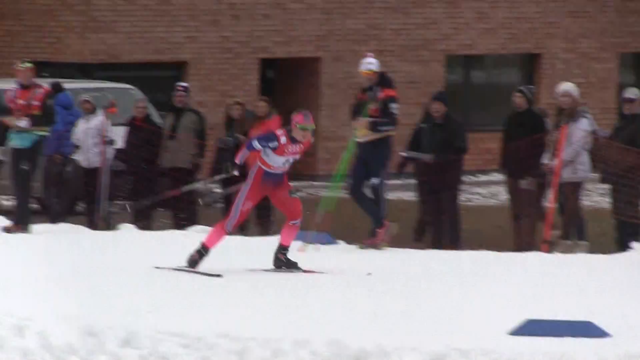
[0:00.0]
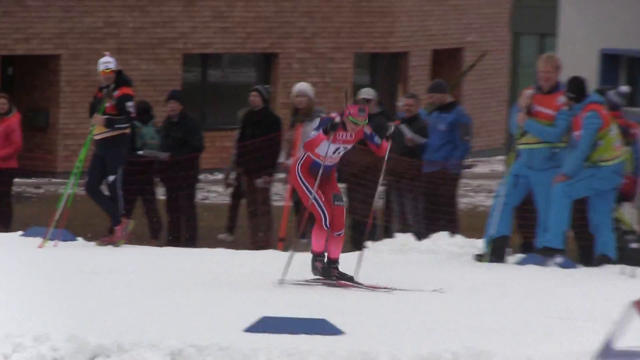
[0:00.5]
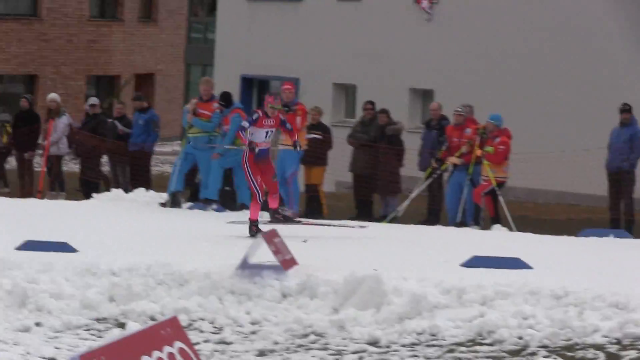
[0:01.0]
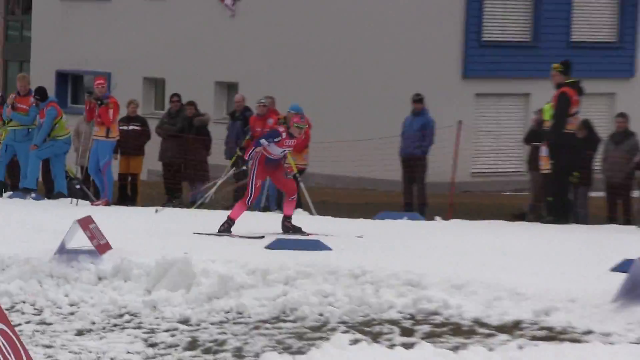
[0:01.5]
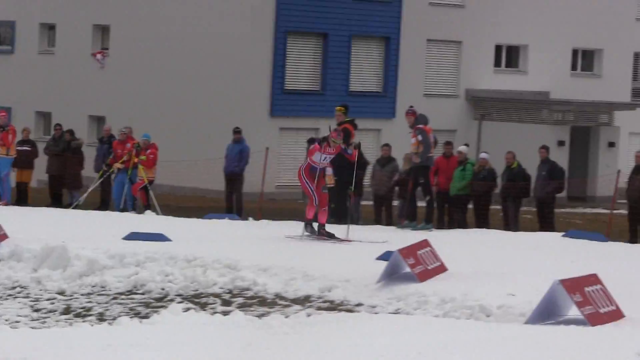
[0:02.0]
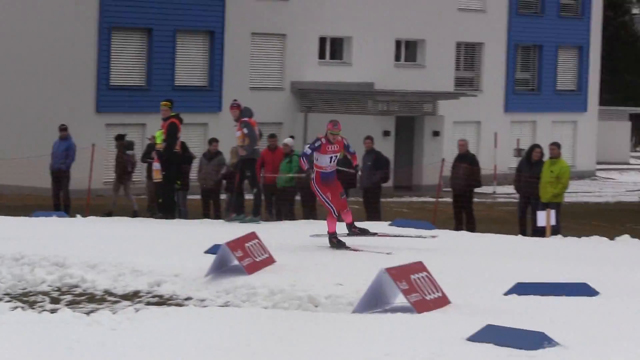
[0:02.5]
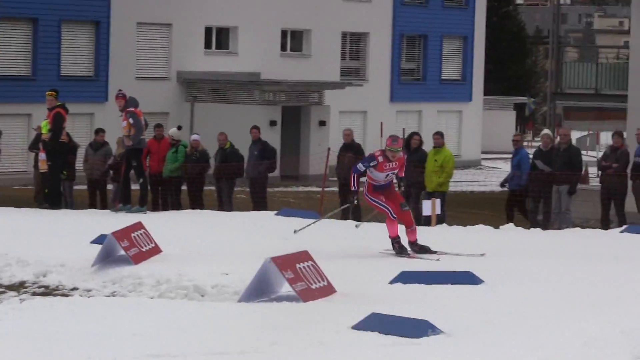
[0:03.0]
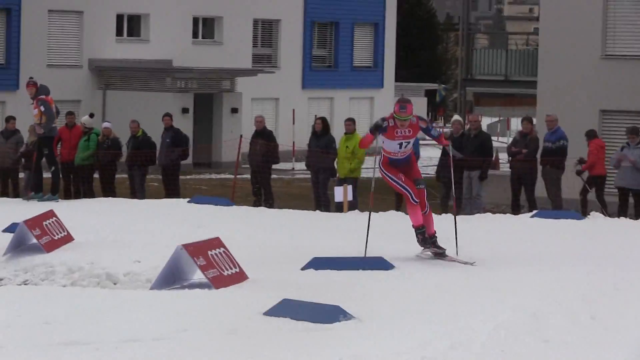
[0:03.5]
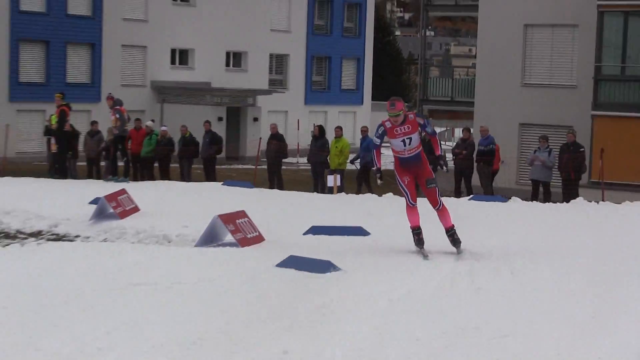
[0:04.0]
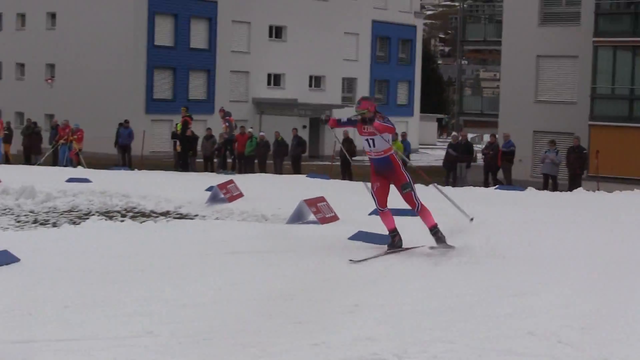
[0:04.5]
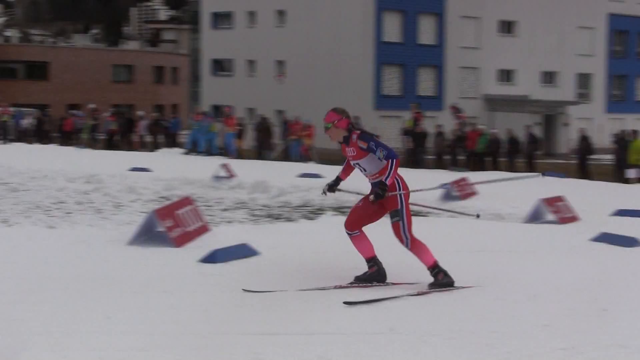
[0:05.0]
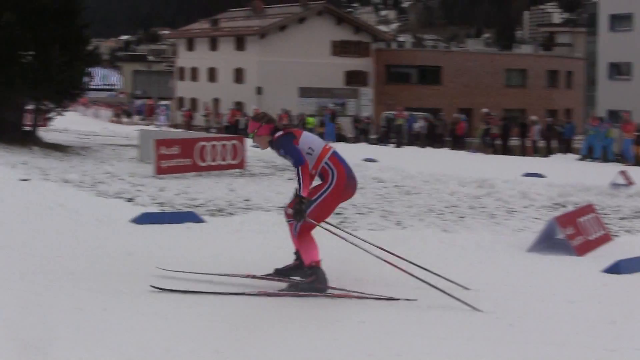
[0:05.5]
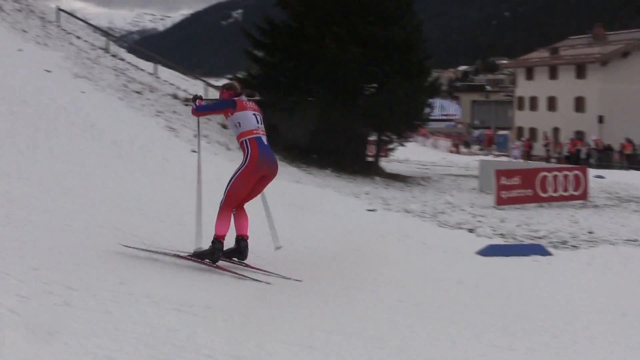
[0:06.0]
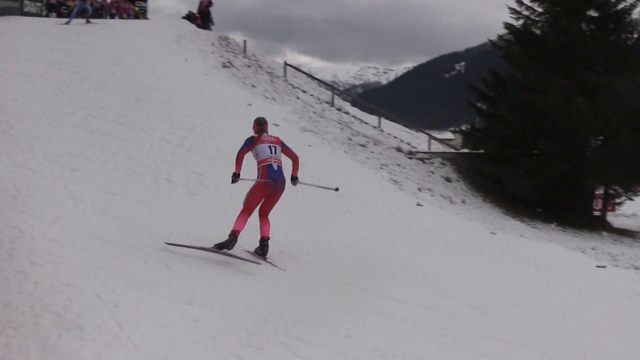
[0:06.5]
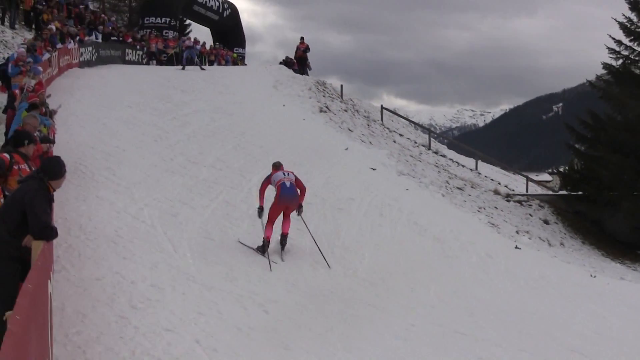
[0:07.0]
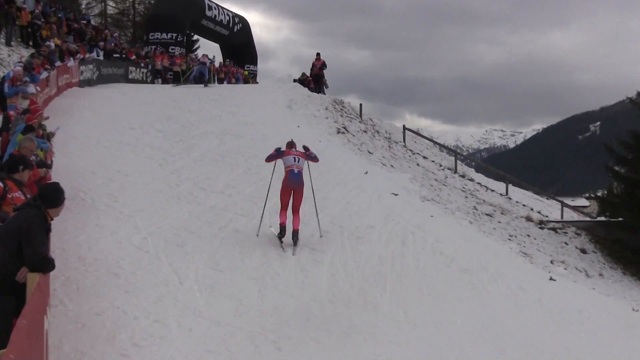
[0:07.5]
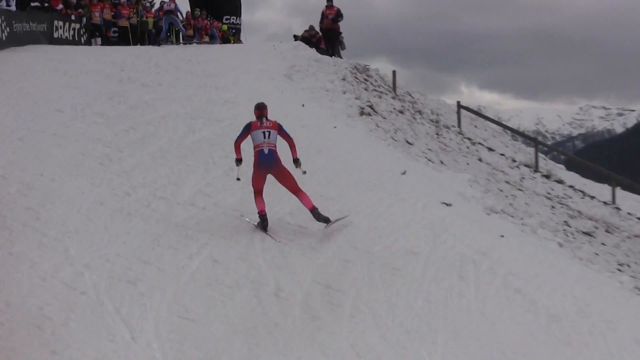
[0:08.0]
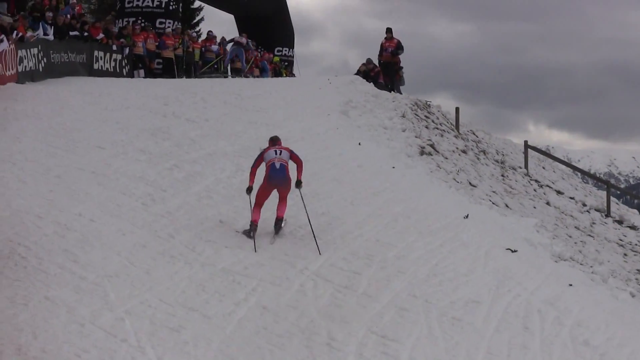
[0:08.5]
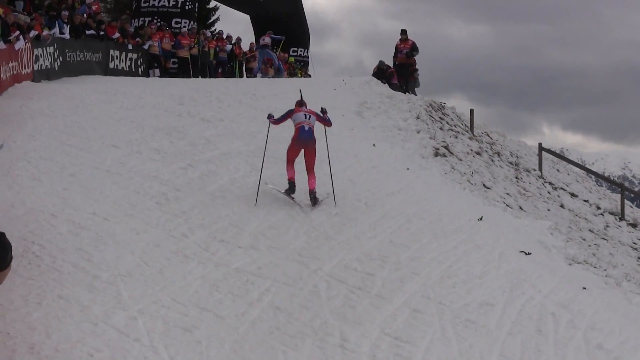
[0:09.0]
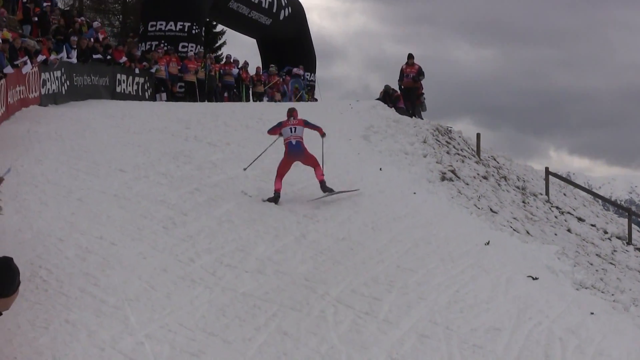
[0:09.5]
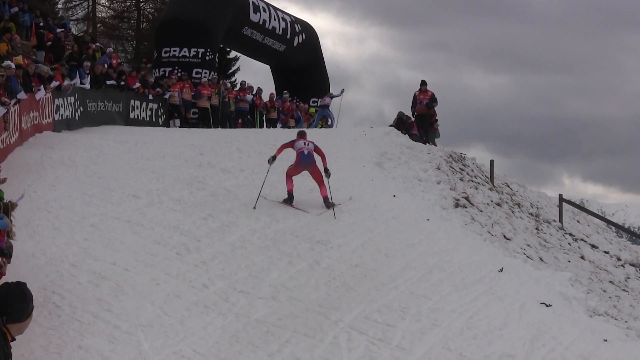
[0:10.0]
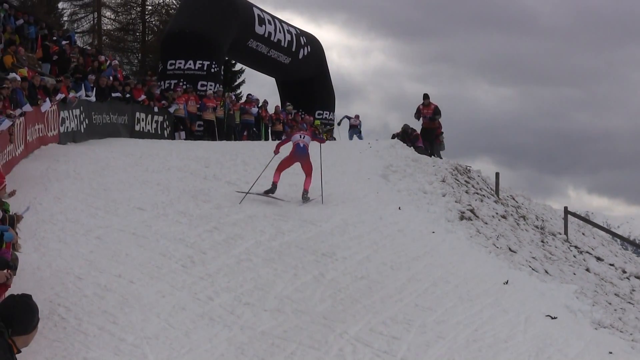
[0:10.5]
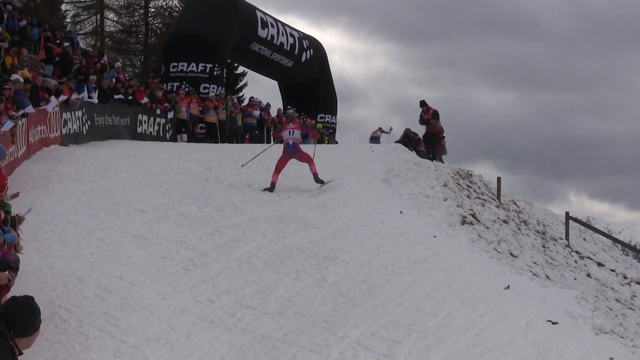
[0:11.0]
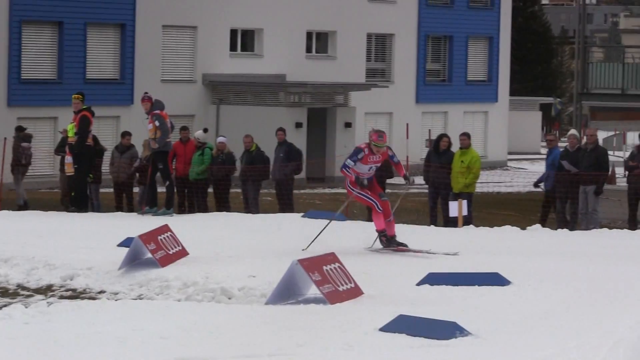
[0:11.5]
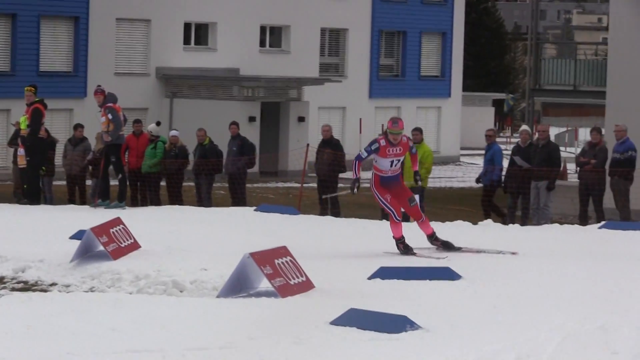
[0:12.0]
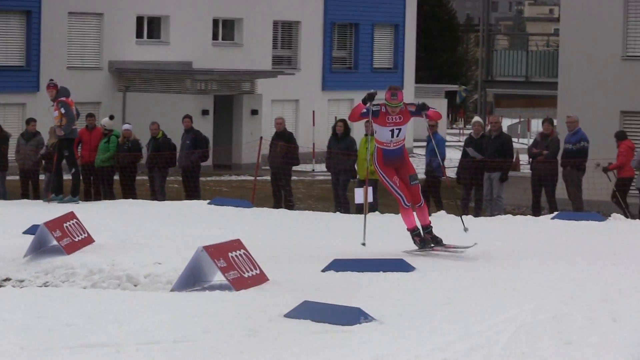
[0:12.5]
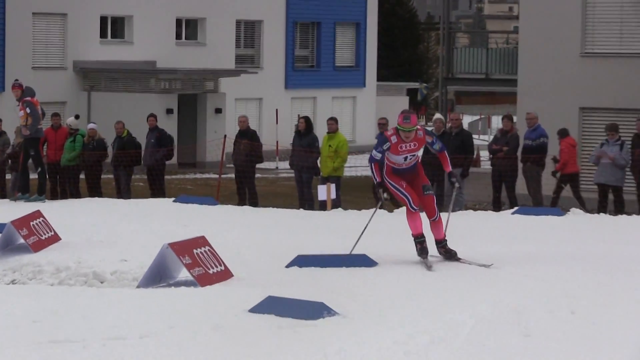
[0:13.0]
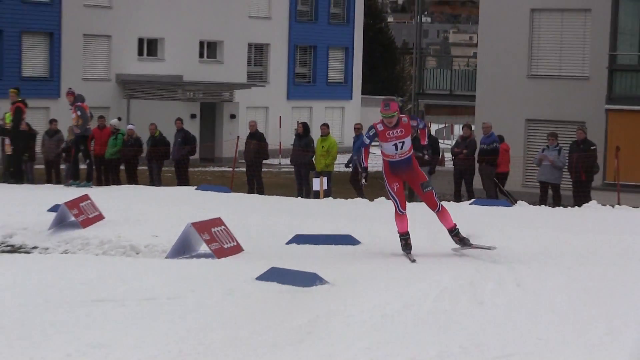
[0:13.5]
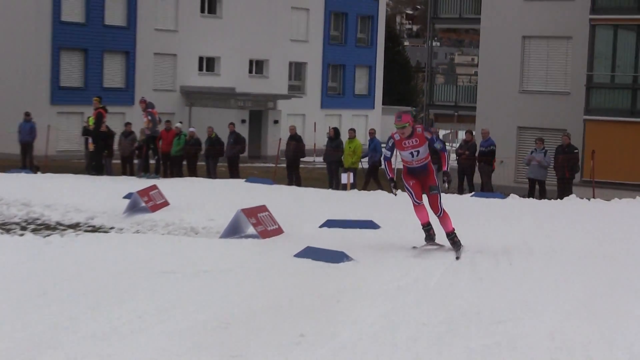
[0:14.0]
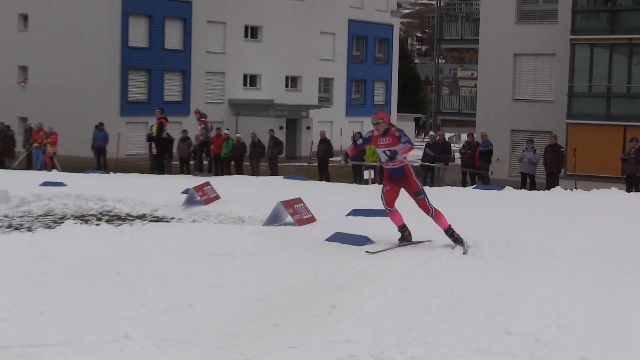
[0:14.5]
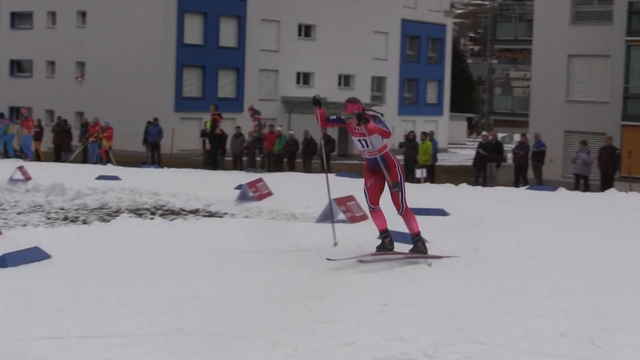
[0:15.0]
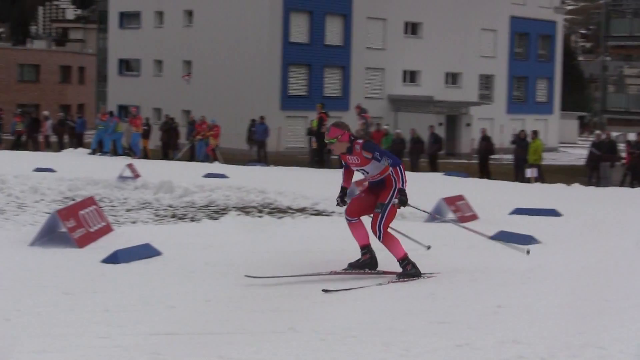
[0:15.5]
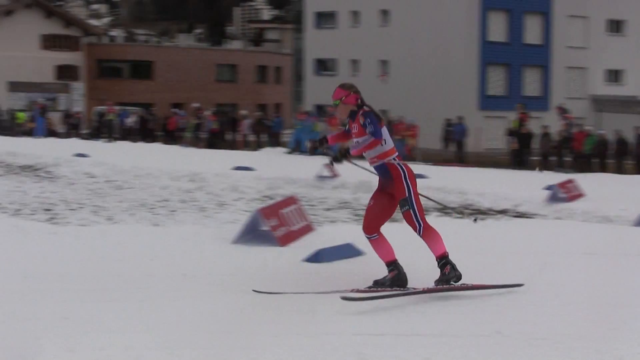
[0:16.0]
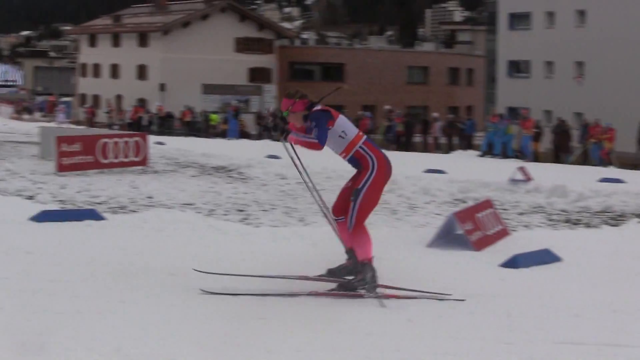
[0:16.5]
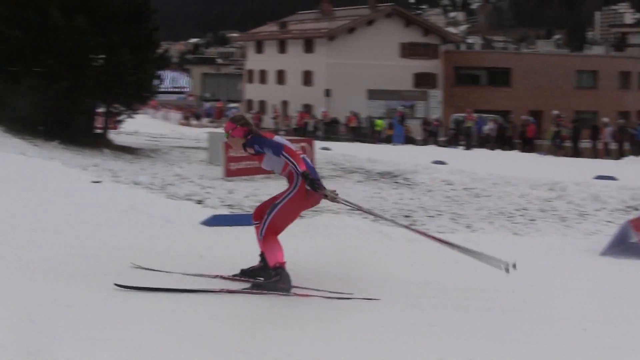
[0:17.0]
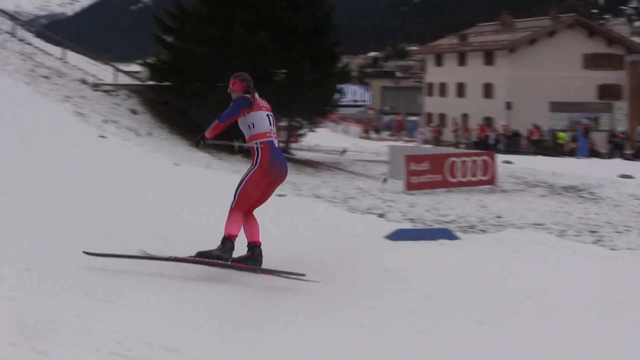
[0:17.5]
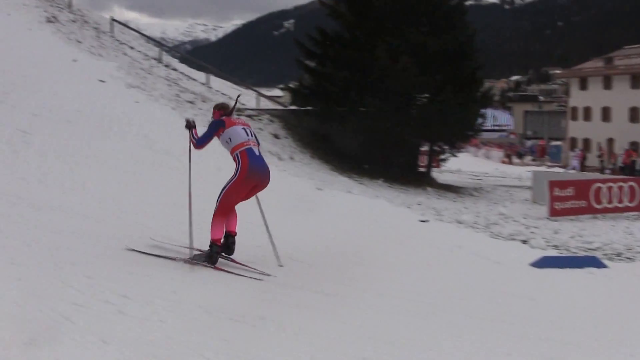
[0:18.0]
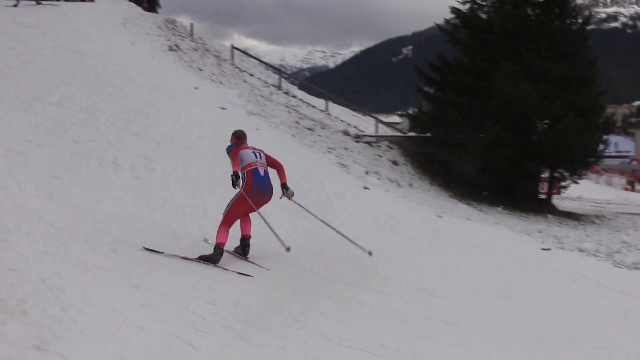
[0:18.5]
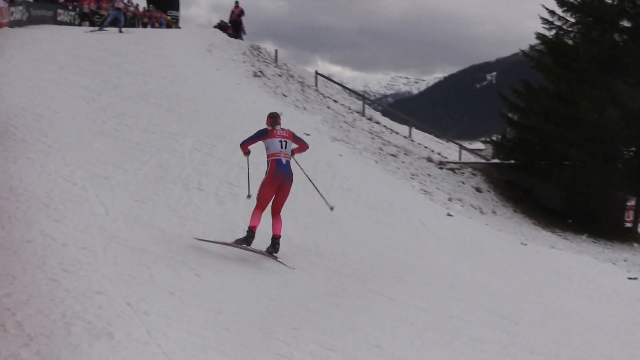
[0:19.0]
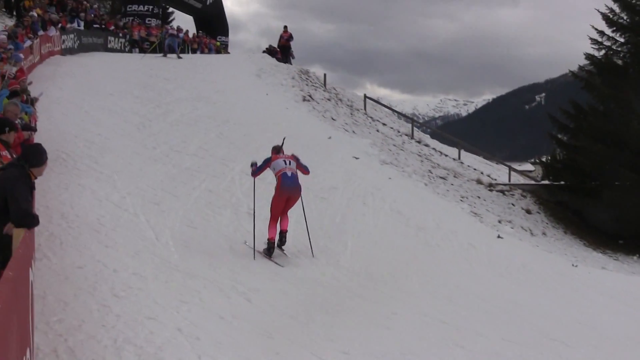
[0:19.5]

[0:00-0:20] A woman at a skiing event pushes aggressively up the slope, trying to reach the top. She wears professional gear and a number, and her ski suit is possibly designed to associate her with a team, though this is hard to tell. At the shoulder of her ski suit is the Olympic symbol, so the event seems to be the Winter Olympics, and it might be somewhere in Europe, judging by the spectators watching the event and the style and architecture of the buildings. She is the main focus. Another person appears to be at the top, ahead of her, apparently from an opposing team, and she looks to be competing with that person.